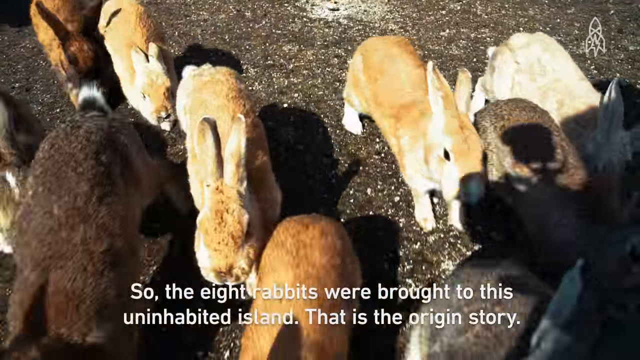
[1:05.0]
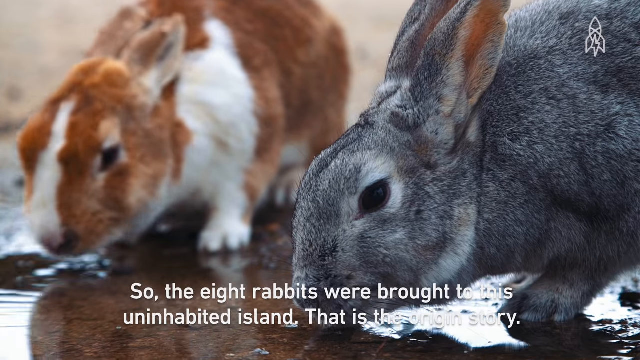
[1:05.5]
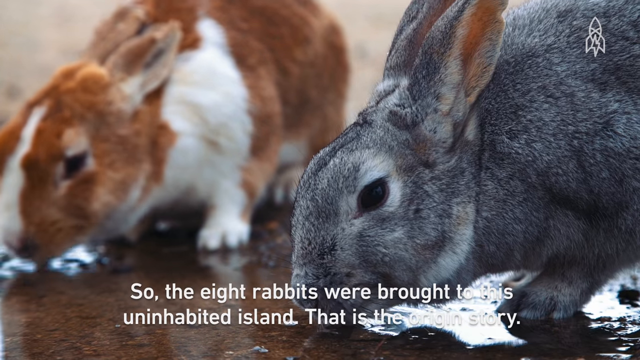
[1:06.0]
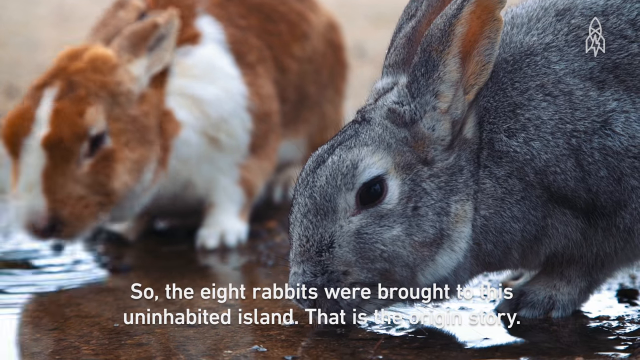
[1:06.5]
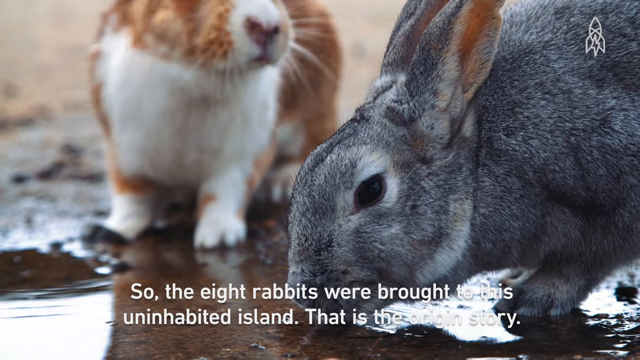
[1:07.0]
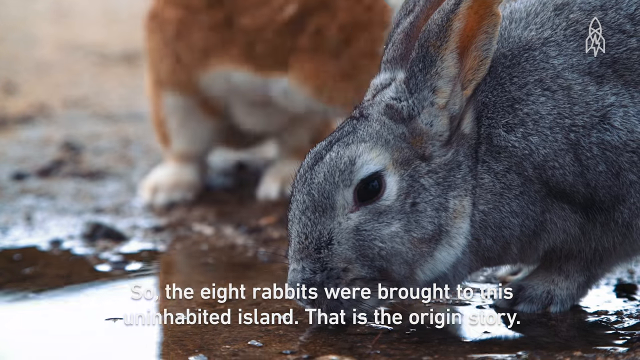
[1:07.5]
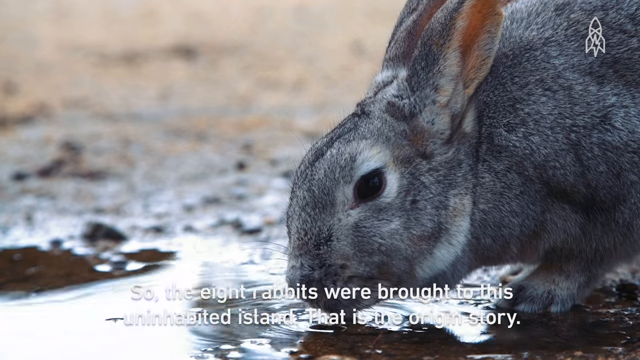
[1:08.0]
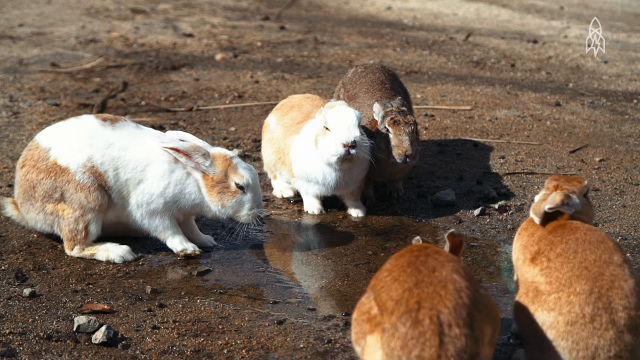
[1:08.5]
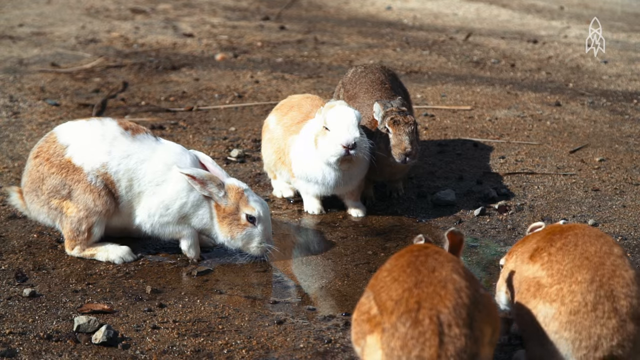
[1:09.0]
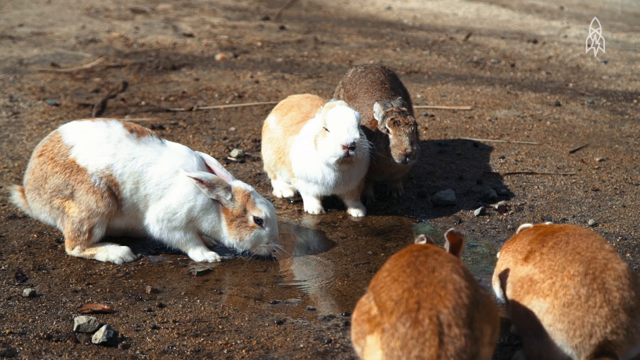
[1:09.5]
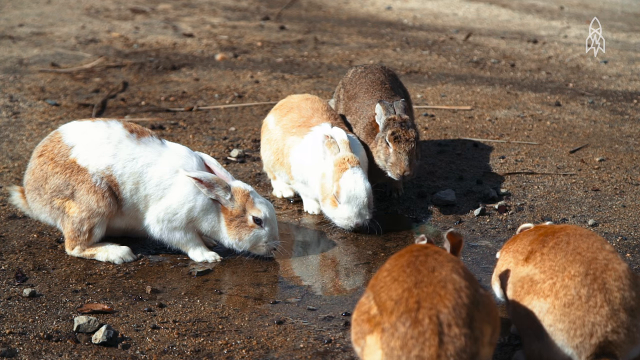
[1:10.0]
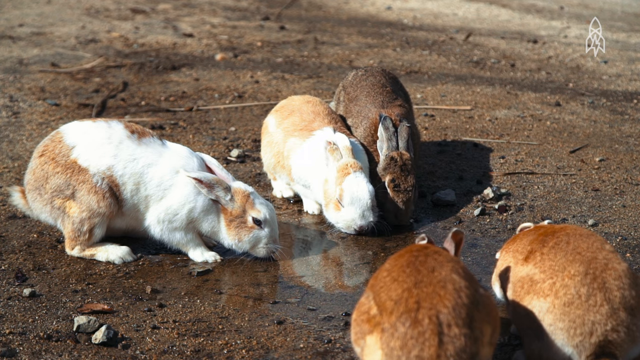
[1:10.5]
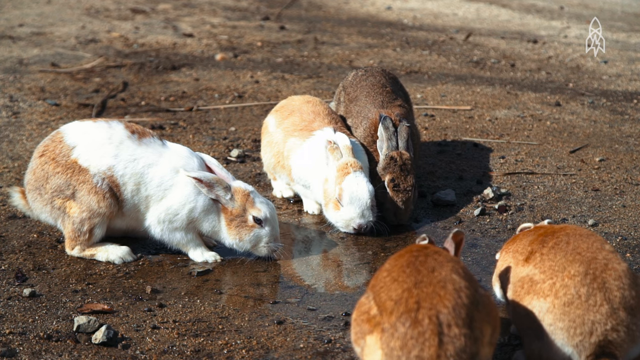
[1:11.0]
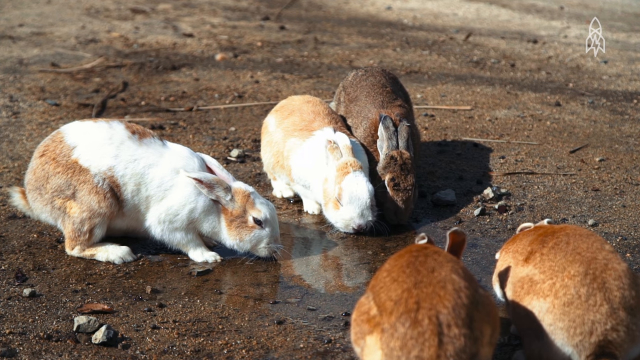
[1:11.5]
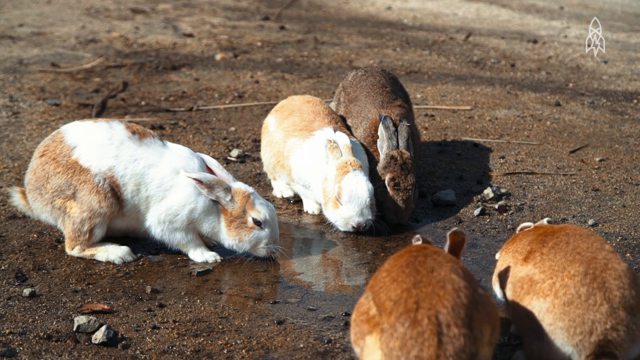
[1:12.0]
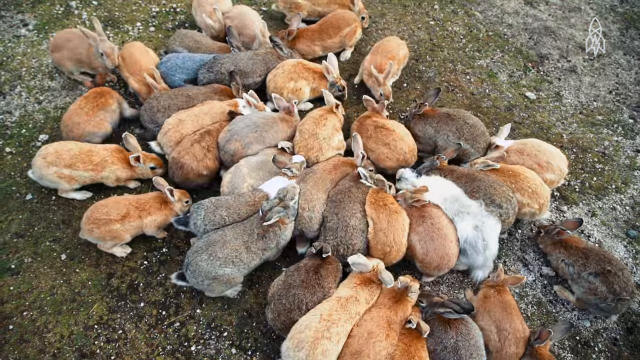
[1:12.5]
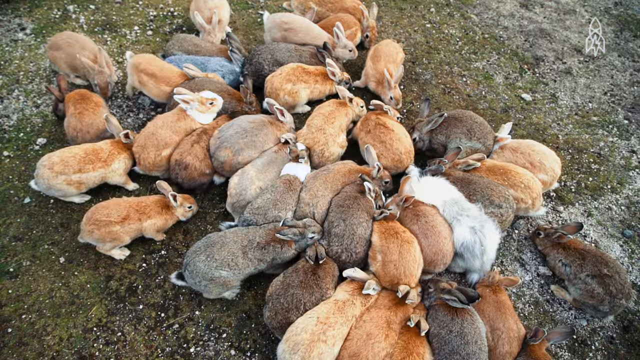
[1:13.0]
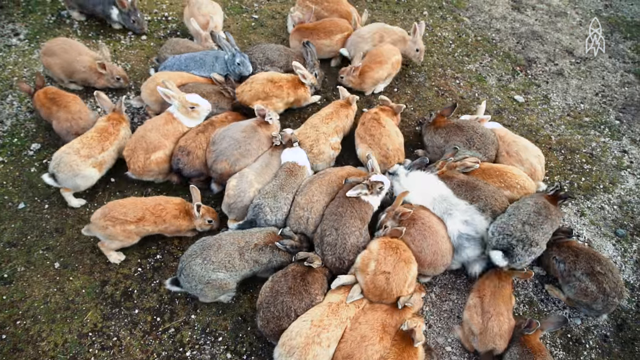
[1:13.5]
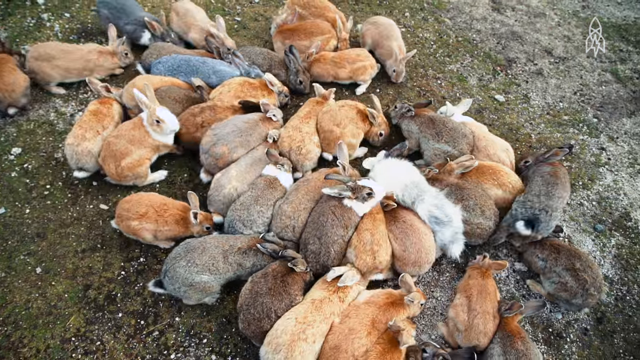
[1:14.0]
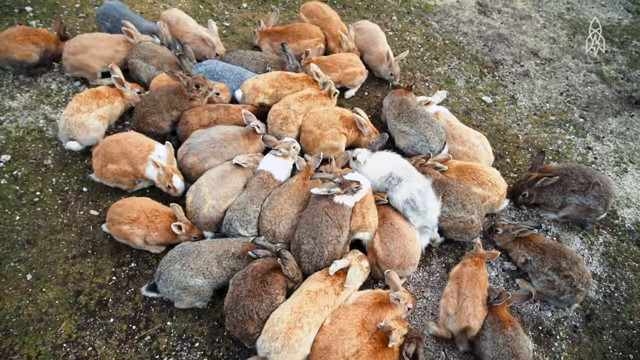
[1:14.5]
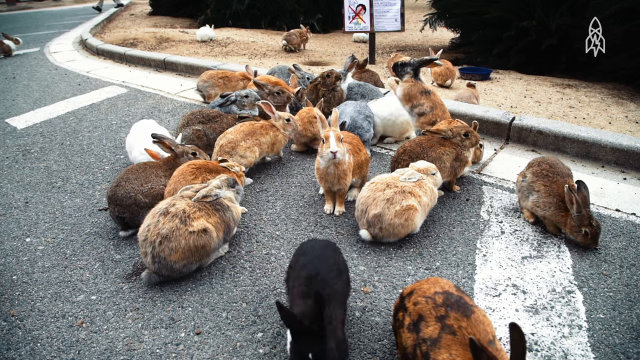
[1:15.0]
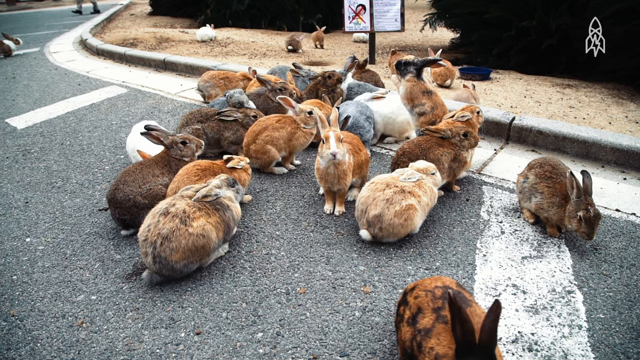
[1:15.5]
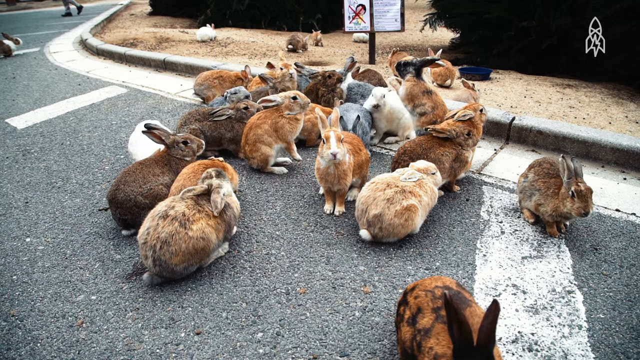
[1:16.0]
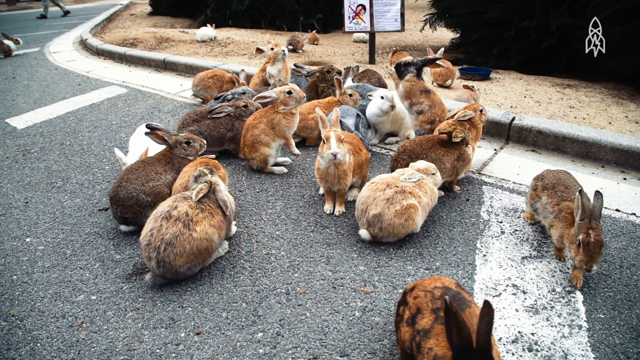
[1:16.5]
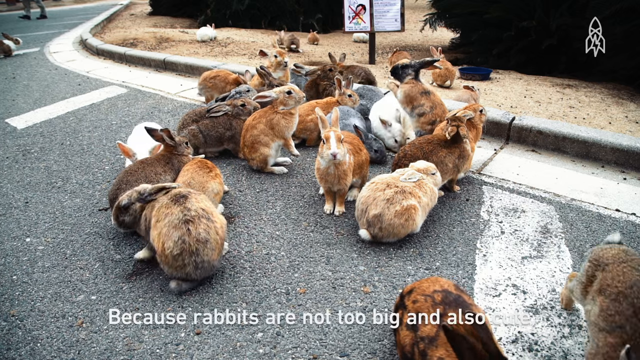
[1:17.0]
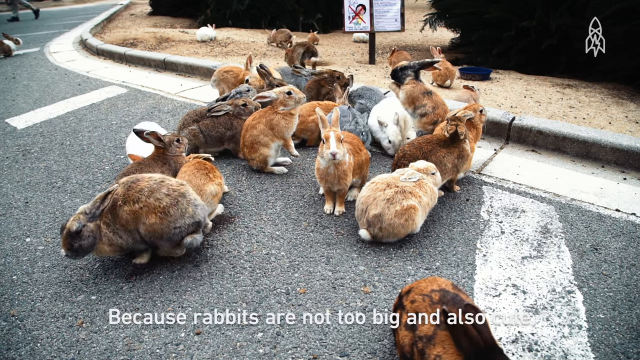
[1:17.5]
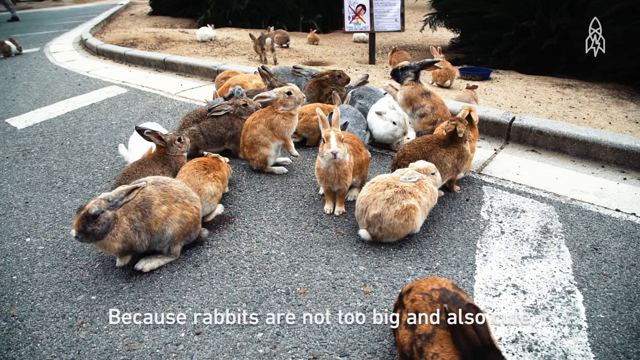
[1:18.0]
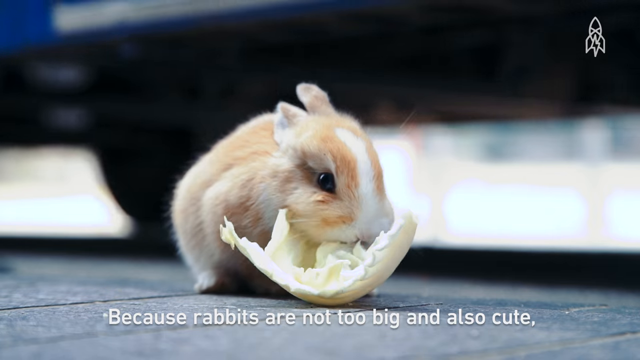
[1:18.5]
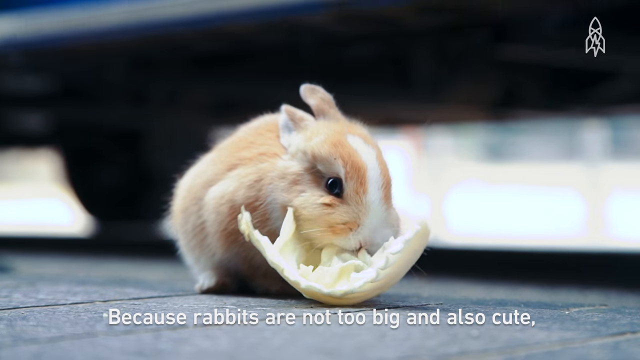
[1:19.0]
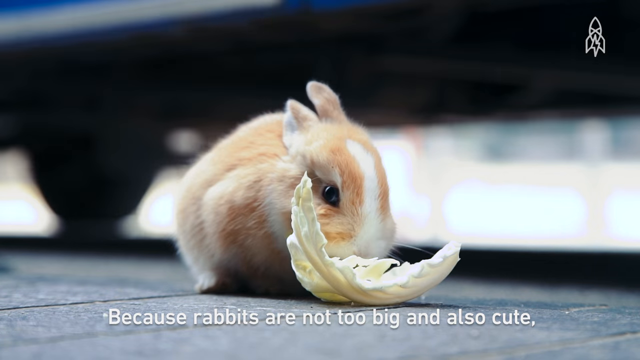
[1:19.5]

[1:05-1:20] A bunch of rabbits drink water from the ground. Most are brown, and there are also a few white rabbits. They eat and drink; there are too many rabbits to count, but five are together drinking water from the same spot. The video then moves to a bunch of rabbits gathered around a pole.